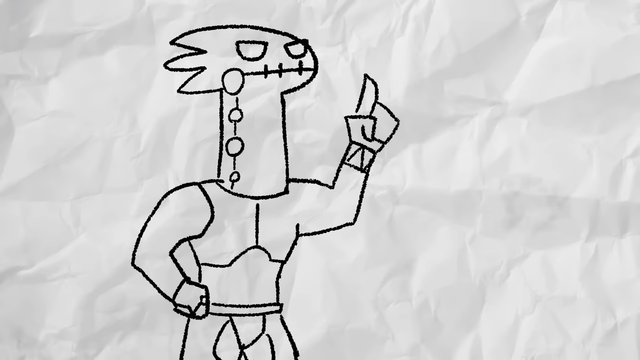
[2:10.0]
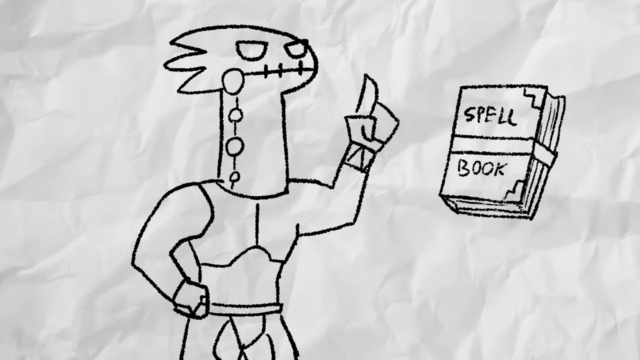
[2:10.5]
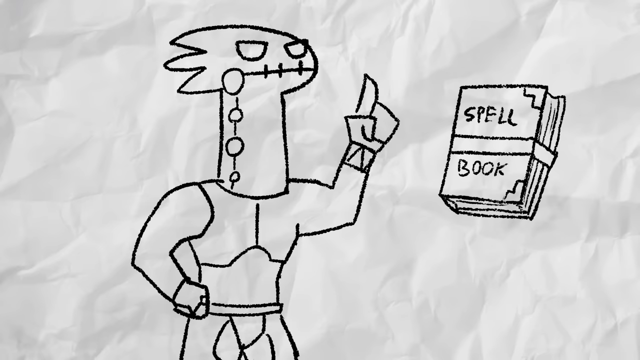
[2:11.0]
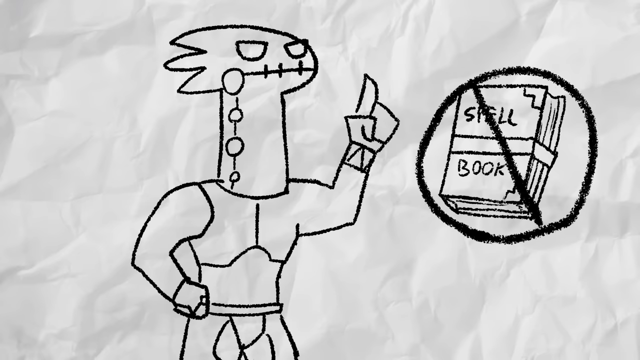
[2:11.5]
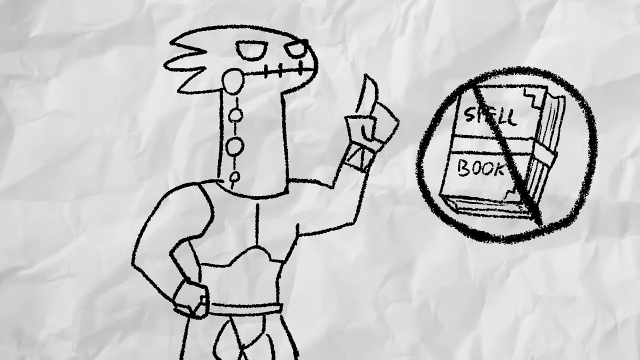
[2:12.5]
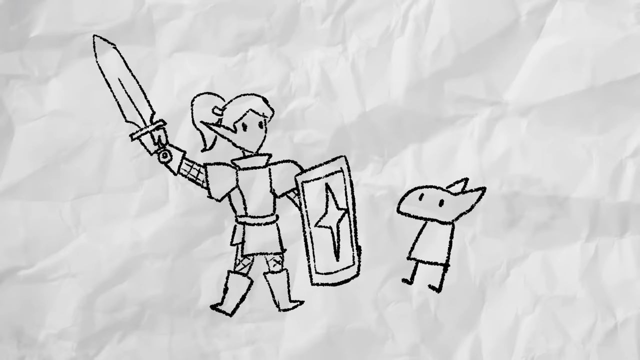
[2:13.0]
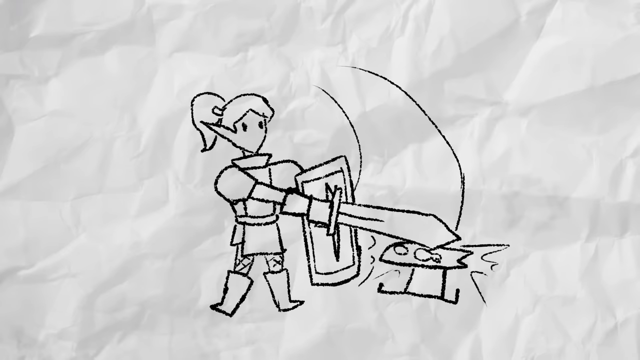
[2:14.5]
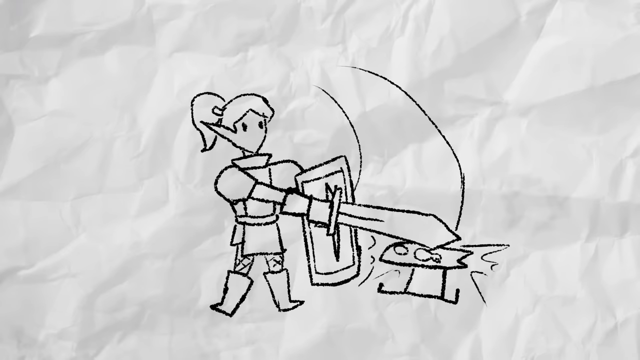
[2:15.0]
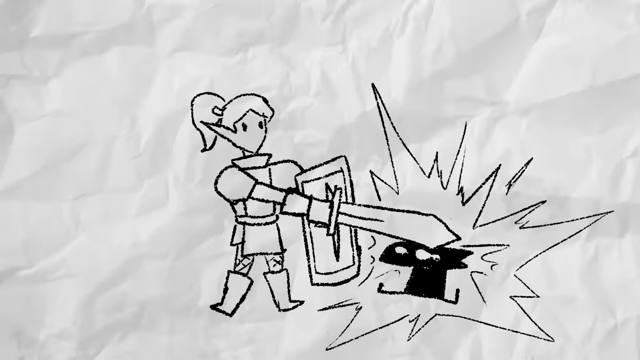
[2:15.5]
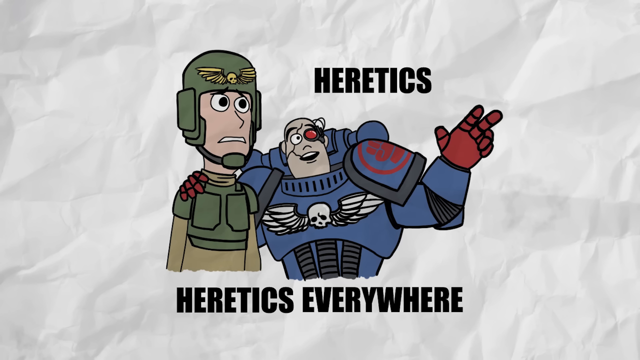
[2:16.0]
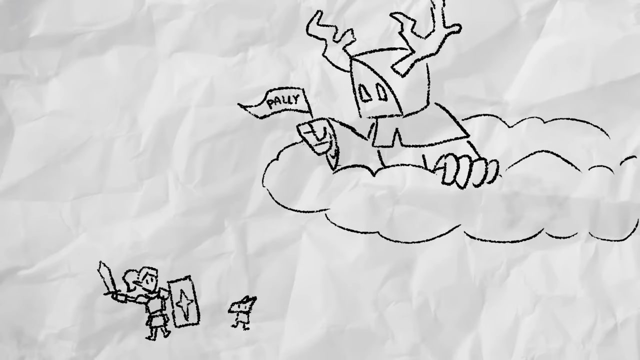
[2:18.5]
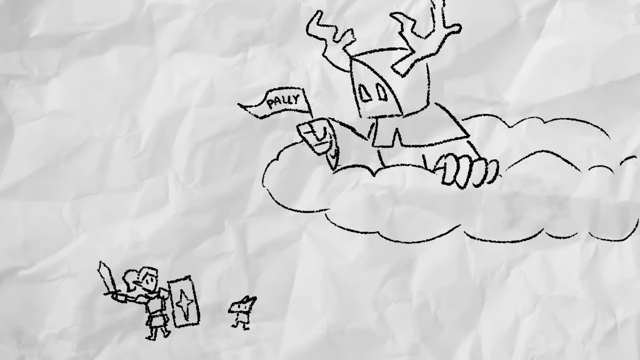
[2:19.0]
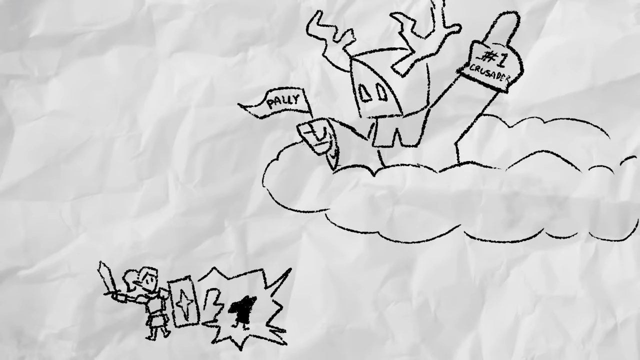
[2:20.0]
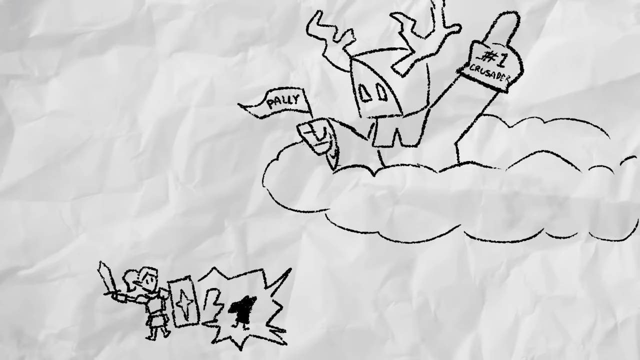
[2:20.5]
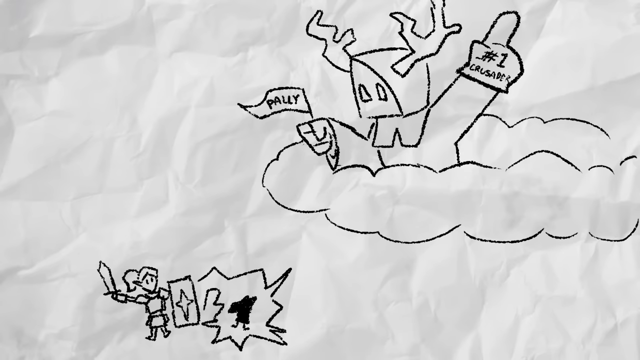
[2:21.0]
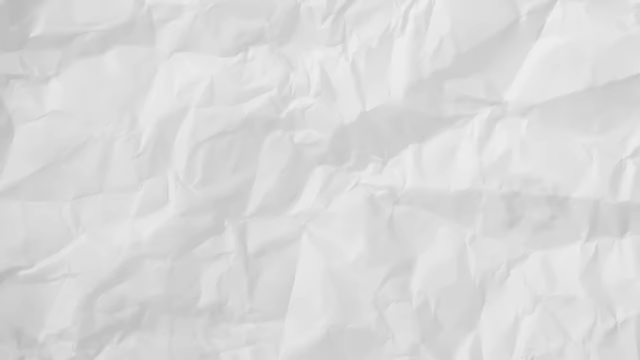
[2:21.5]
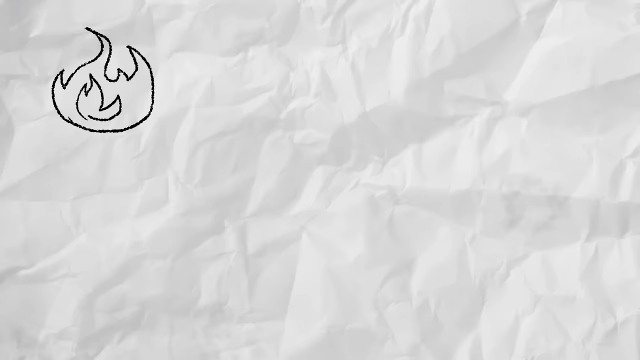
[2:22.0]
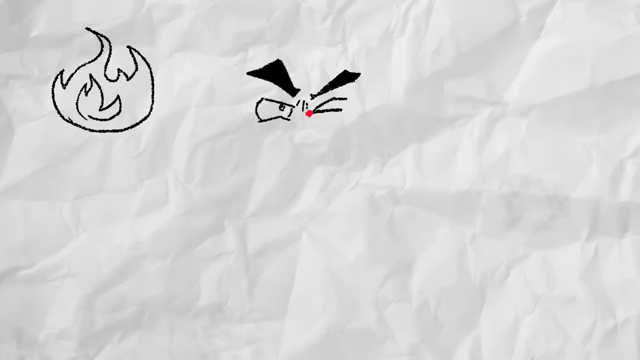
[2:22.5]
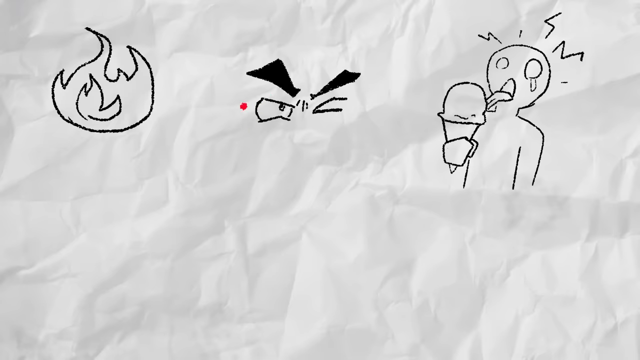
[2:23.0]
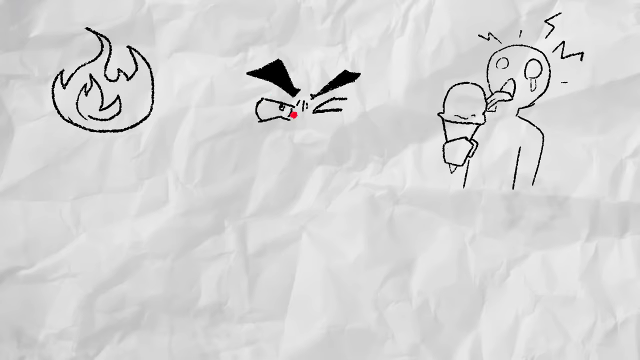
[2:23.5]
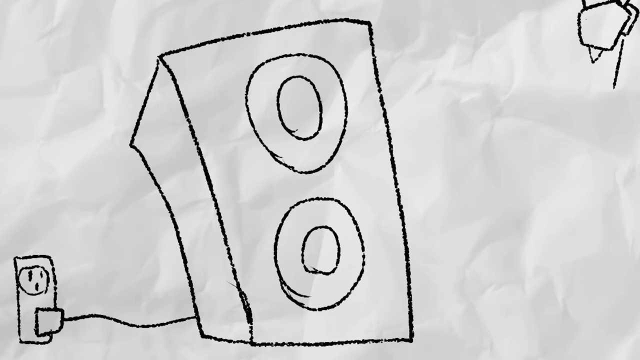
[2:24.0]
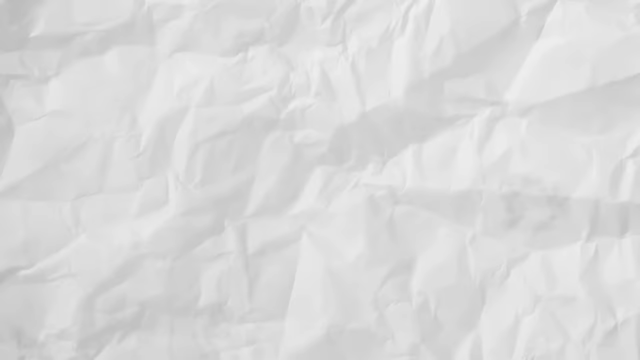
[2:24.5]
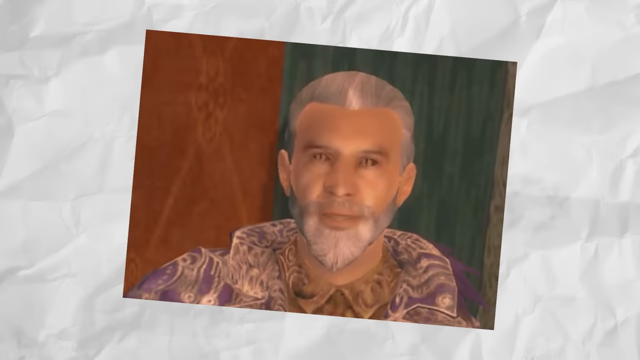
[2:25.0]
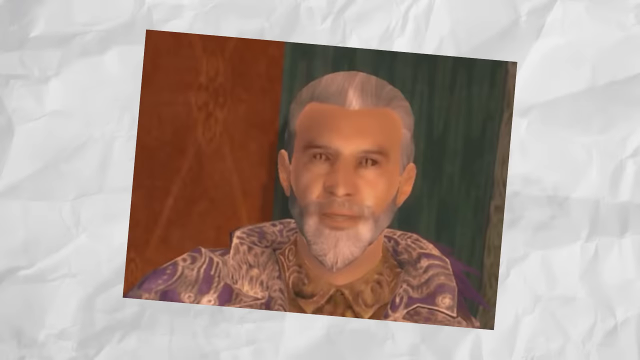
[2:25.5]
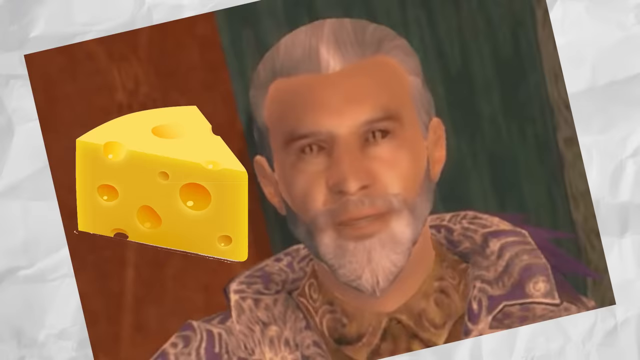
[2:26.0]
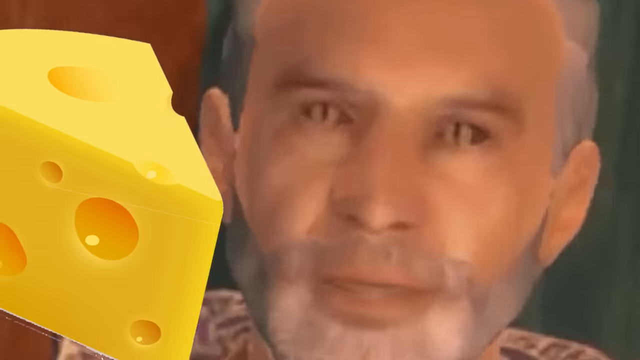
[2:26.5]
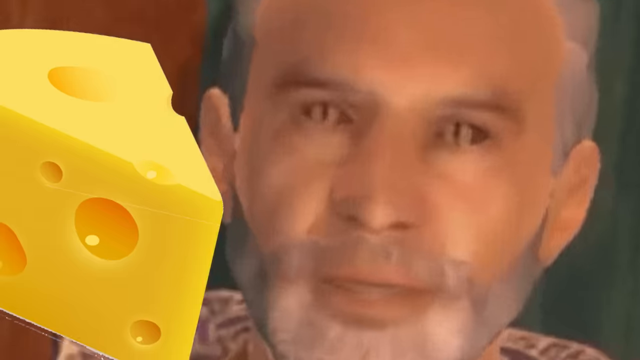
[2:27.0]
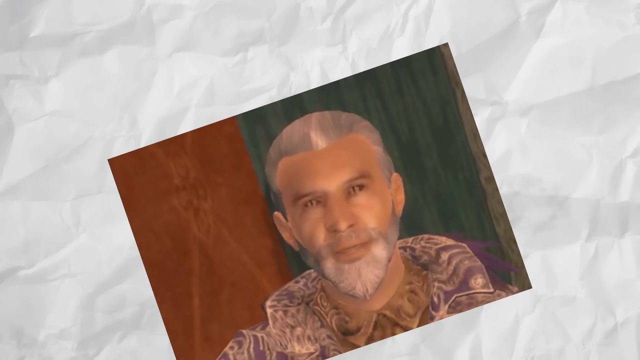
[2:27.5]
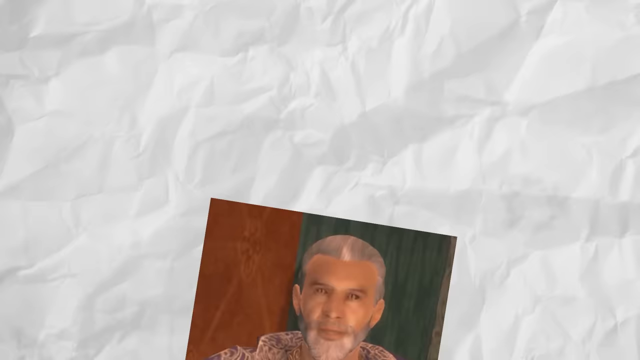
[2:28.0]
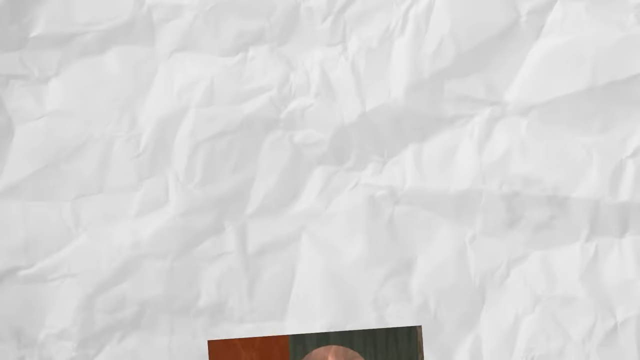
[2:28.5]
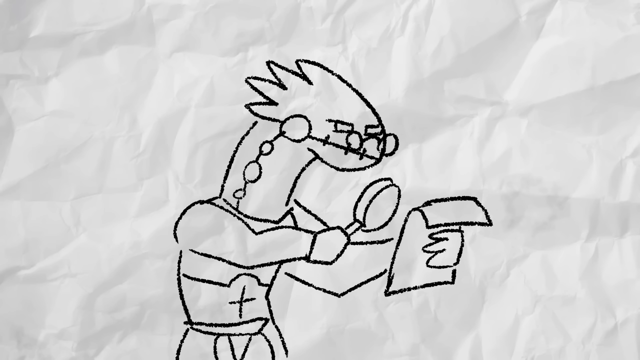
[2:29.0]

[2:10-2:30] In front of a white piece of paper that looks crumpled up, a character who looks sort of like a dinosaur looks really mad, with his finger up in the air. To his right is a book with black text that says "spell book" and a prohibited sign over it. A woman holds a shield and a large sword, with a smaller character to her right; she hits him over the head with the sword and he goes black. Then what looks to be Woody and Buzz Lightyear appear dressed in some kind of war gear, with black text that says "heretics, heretics everywhere."